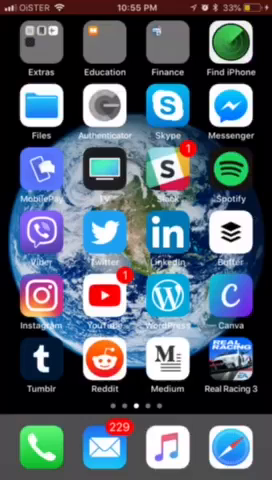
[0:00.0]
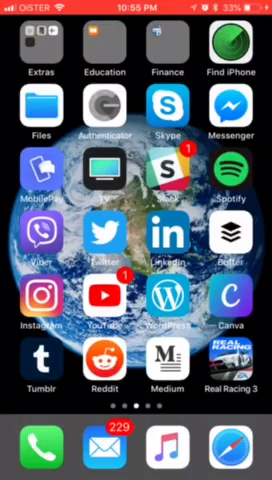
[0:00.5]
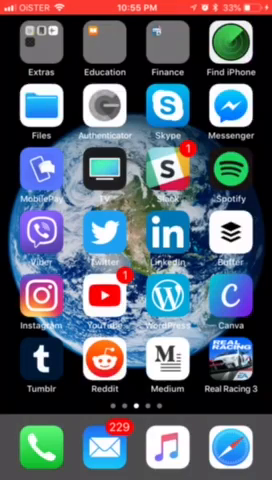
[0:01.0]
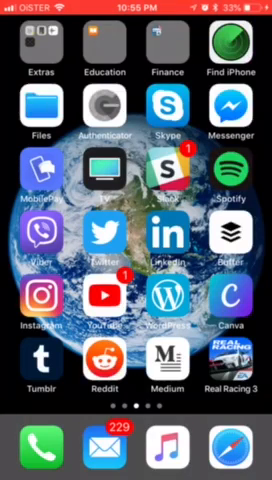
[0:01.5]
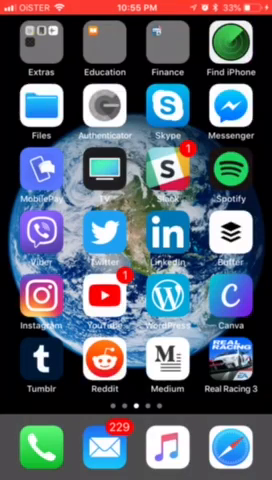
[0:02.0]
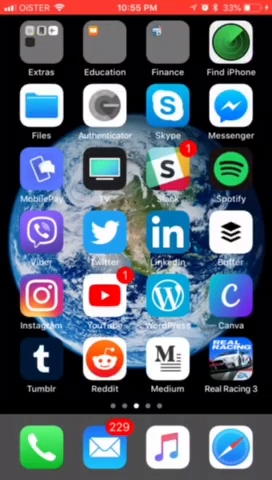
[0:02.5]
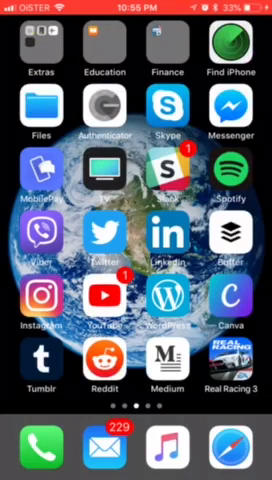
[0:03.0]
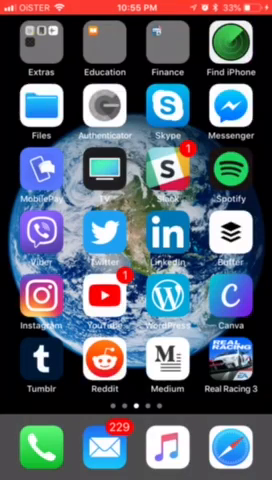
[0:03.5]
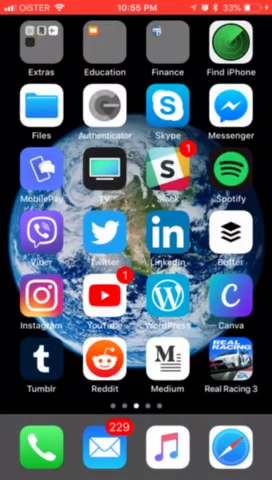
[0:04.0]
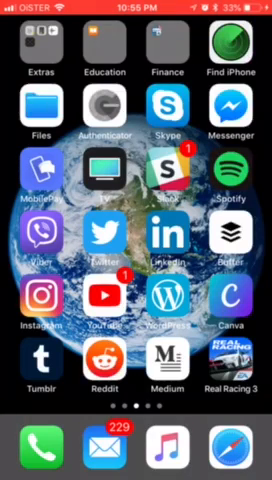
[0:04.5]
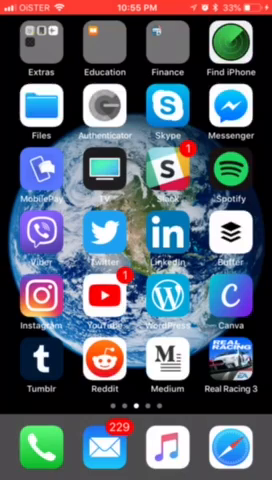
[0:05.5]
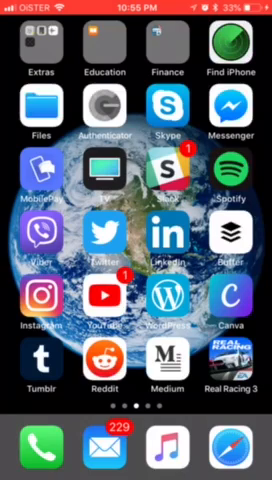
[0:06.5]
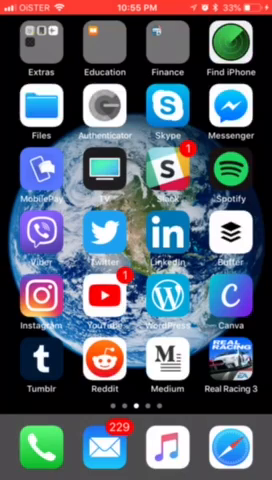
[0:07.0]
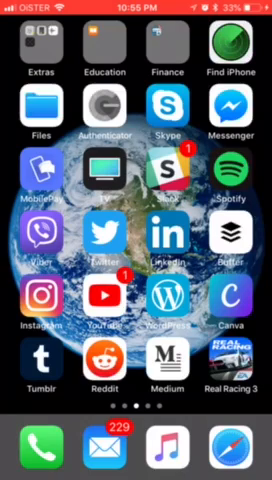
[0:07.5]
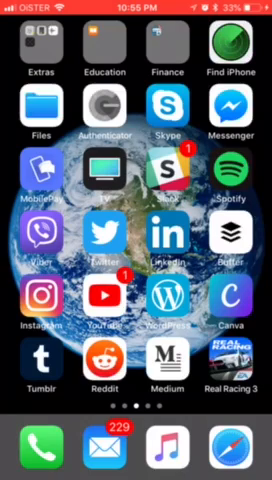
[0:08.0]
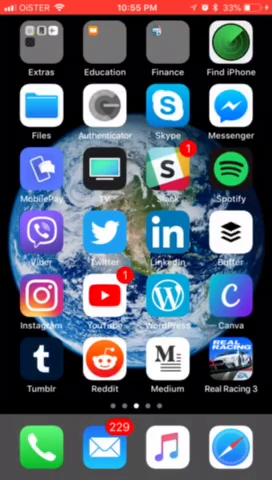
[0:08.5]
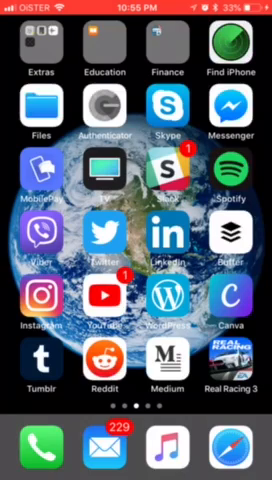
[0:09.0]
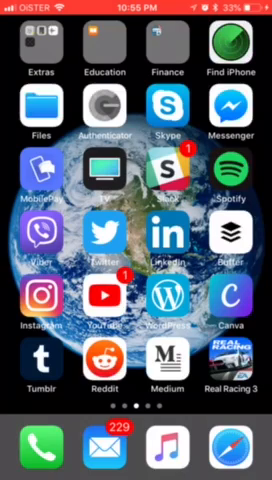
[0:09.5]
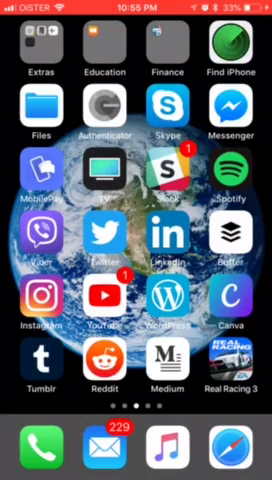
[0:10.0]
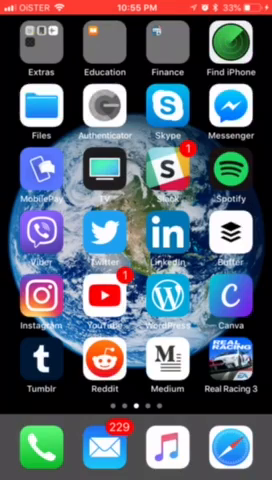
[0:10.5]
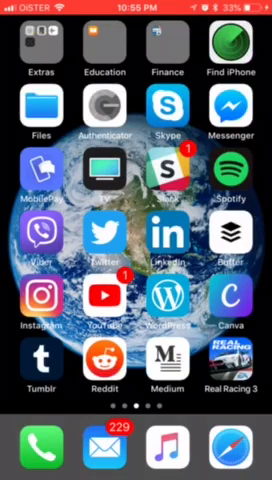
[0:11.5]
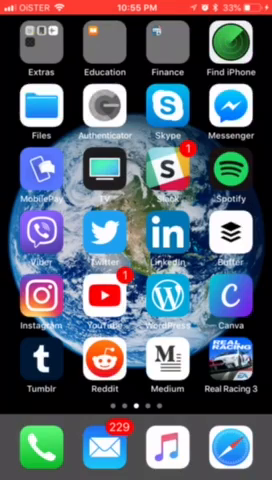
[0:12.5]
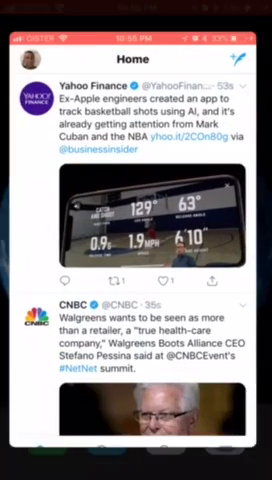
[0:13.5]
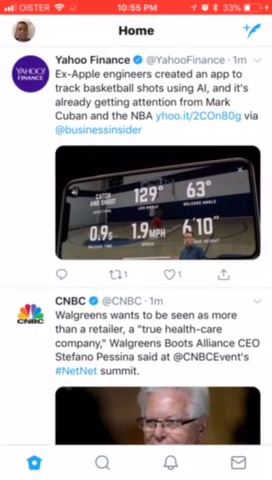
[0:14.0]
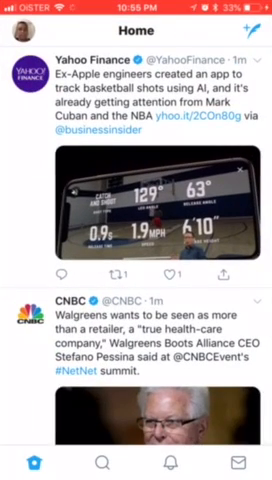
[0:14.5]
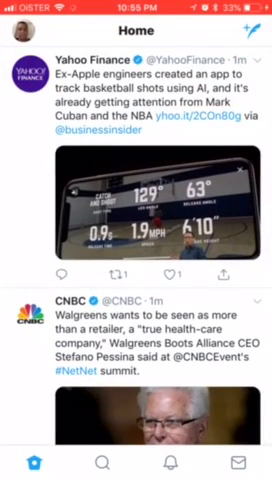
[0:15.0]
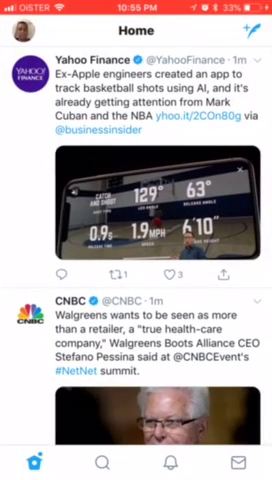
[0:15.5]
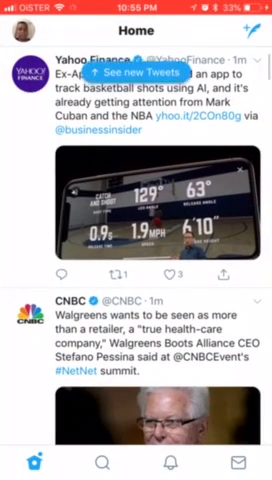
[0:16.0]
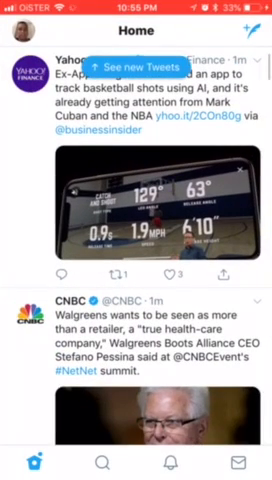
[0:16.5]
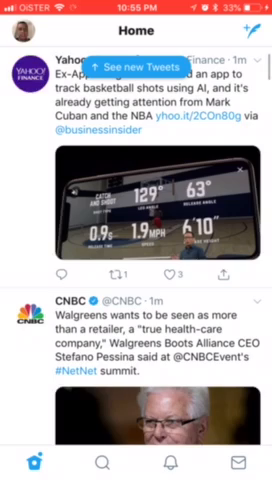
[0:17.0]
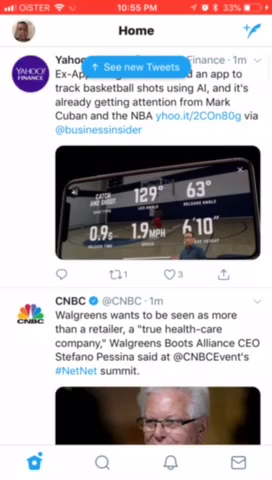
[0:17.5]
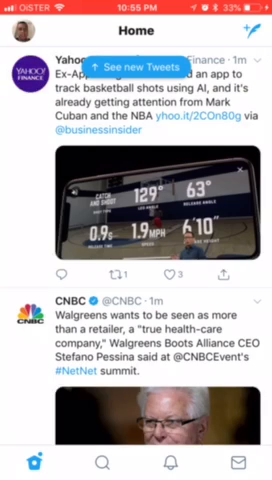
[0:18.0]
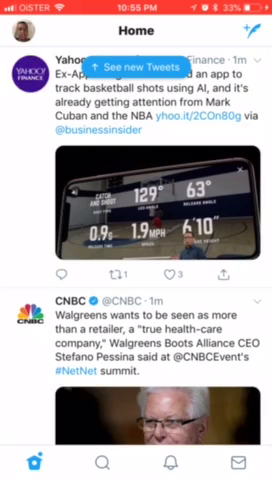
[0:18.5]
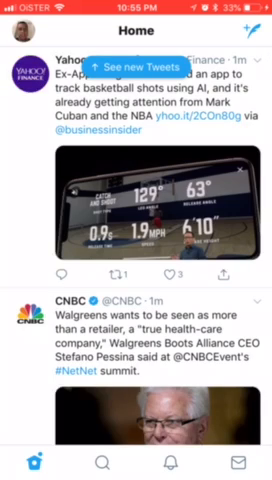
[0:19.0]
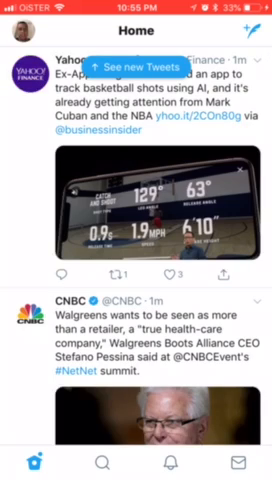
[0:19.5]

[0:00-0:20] The phone is an iPhone, and the time reads five minutes to 11 in the evening. It uses the Oyster network and is connected to Wi-Fi, with the battery at 33 percent. The apps on the iPhone include Messenger, Spotify, Find iPhone, Skype, Finance, Education, an Extras folder, Files, Instagram, Tumblr, Reddit, Medium, a call log, a messaging app, a music app, a GPS app and WordPress. The picture quality is not very good, suggesting something may be wrong with the phone. The person appears to be trying to process something but seems to be having difficulty, and which model of iPhone it is remains unclear.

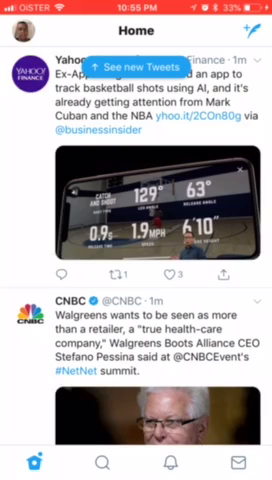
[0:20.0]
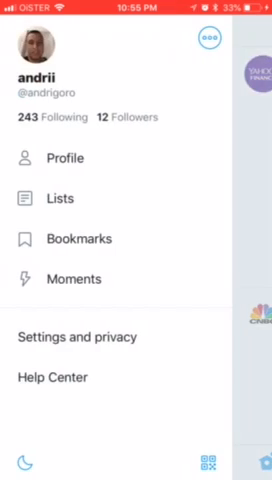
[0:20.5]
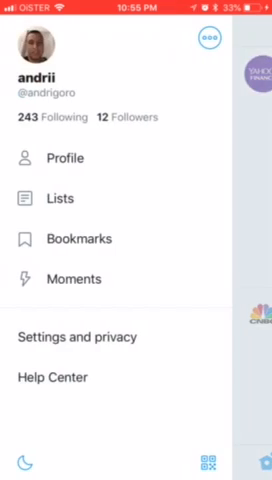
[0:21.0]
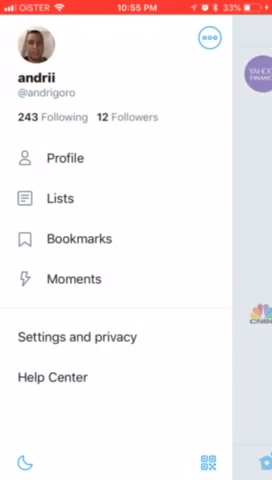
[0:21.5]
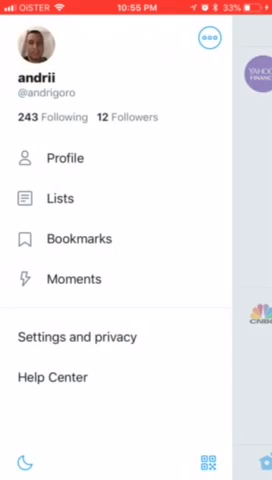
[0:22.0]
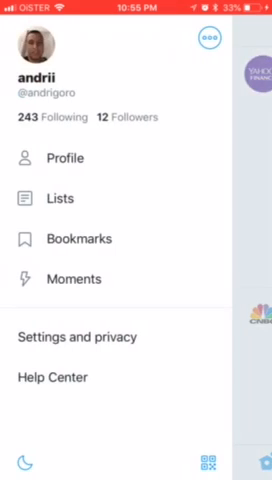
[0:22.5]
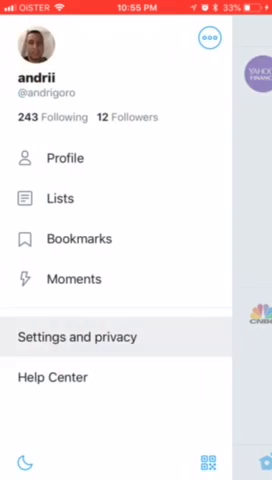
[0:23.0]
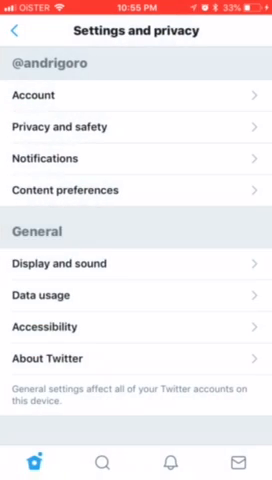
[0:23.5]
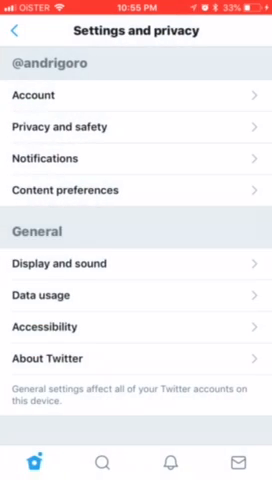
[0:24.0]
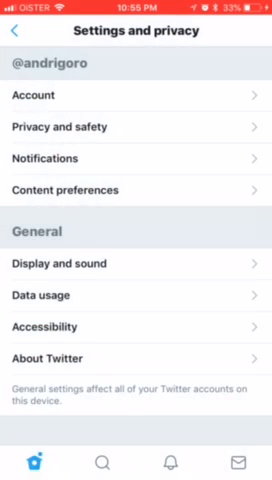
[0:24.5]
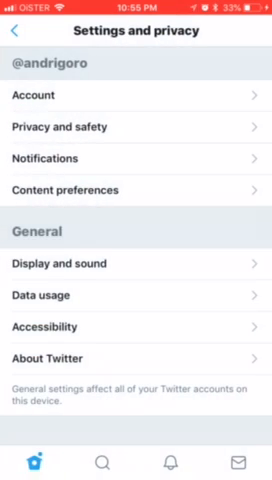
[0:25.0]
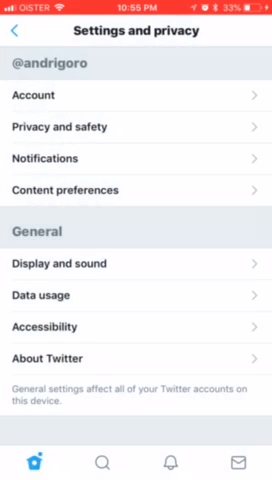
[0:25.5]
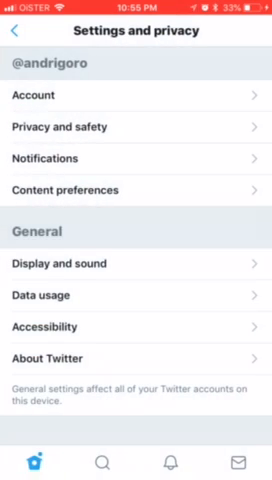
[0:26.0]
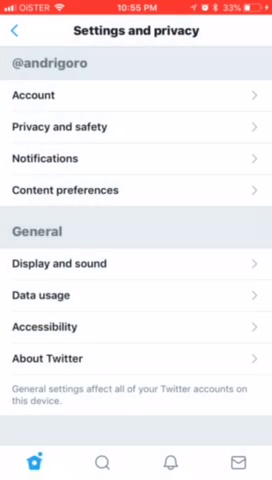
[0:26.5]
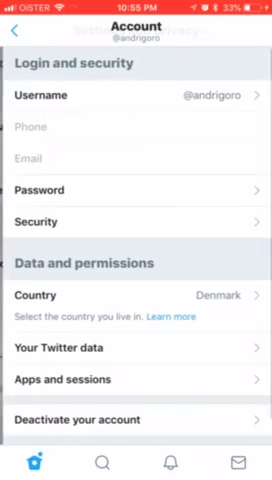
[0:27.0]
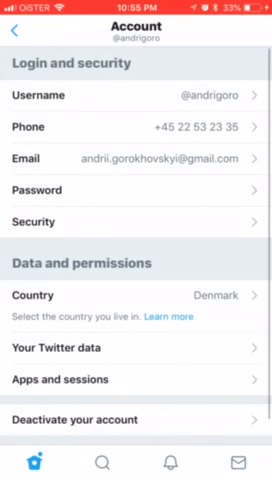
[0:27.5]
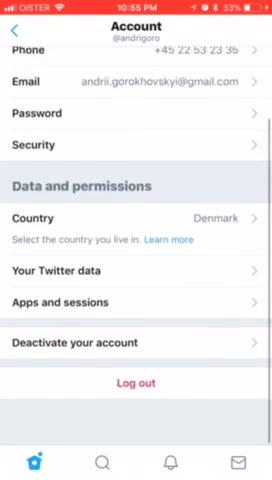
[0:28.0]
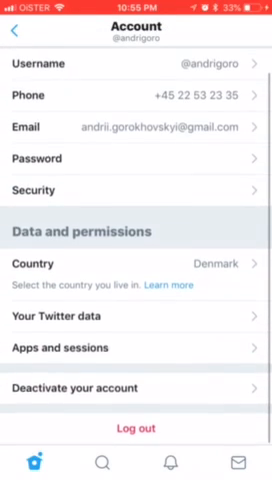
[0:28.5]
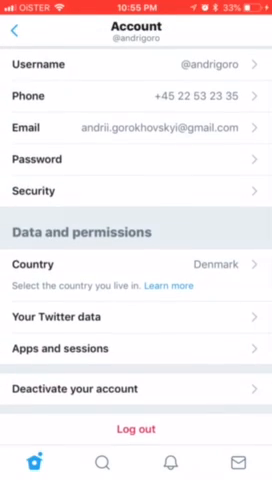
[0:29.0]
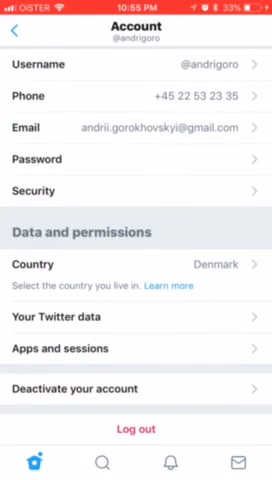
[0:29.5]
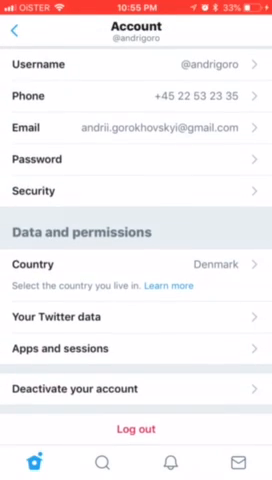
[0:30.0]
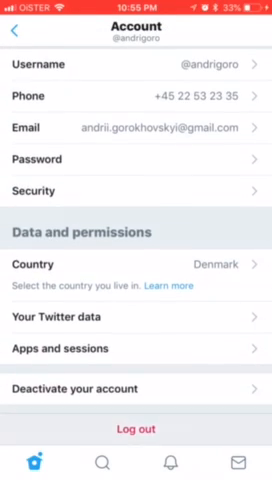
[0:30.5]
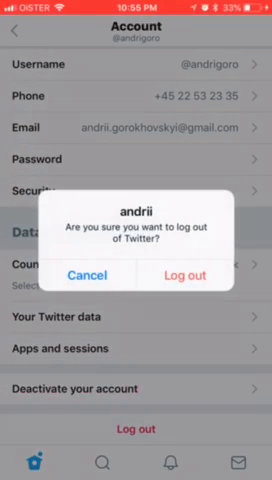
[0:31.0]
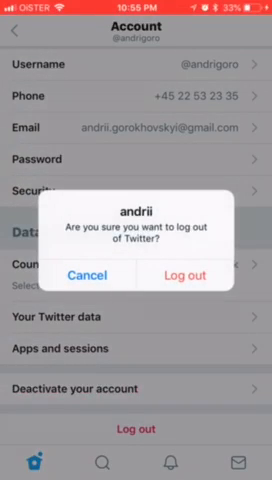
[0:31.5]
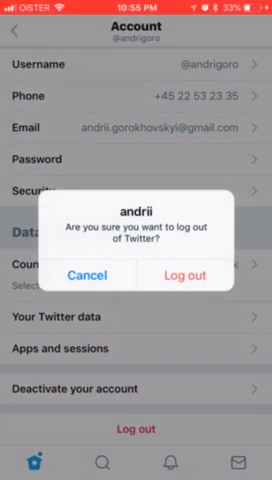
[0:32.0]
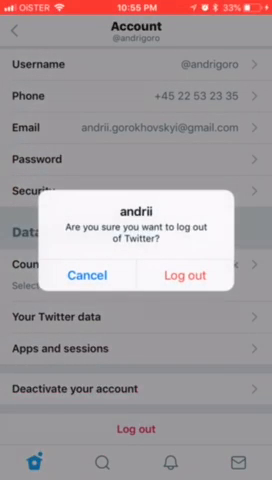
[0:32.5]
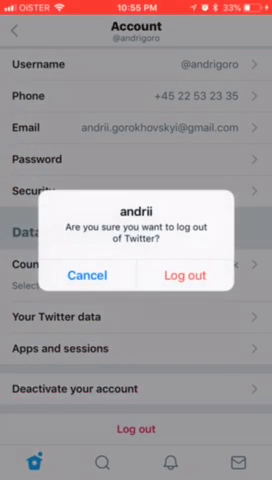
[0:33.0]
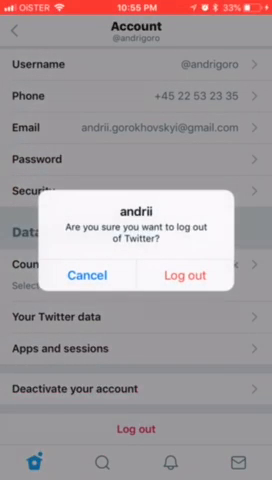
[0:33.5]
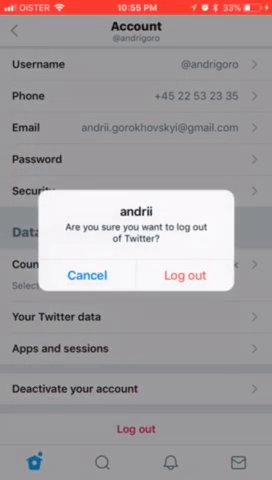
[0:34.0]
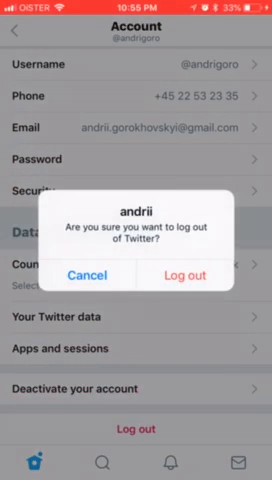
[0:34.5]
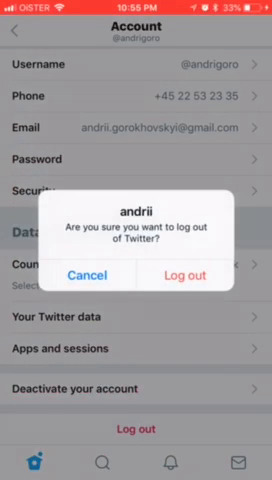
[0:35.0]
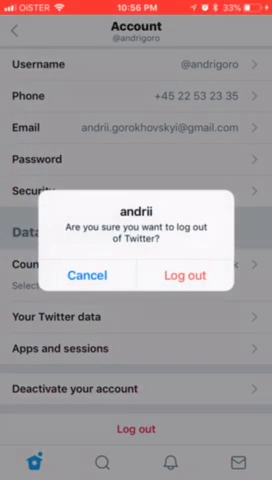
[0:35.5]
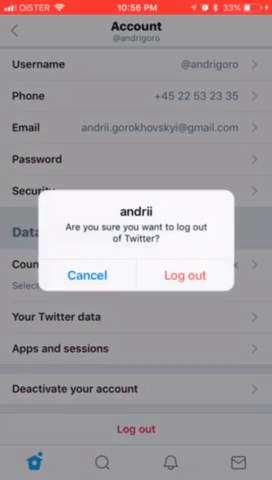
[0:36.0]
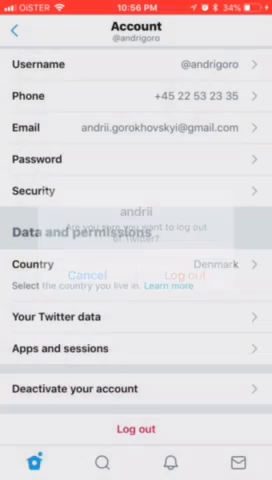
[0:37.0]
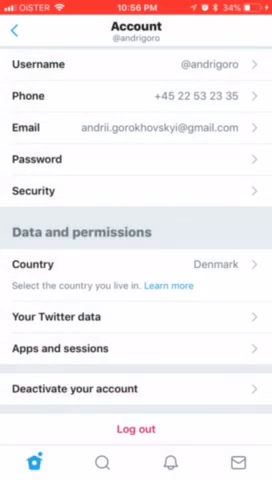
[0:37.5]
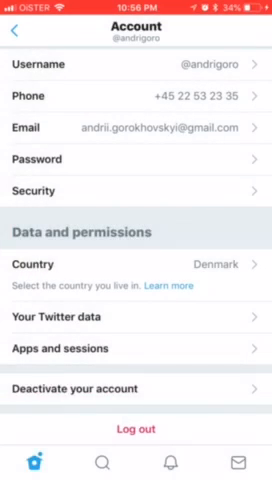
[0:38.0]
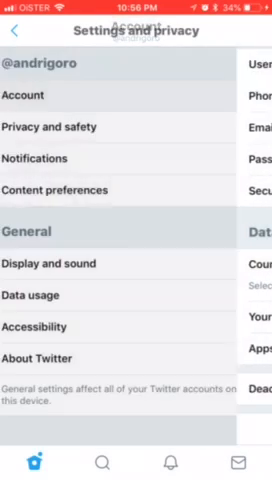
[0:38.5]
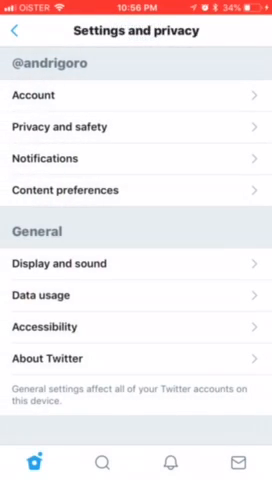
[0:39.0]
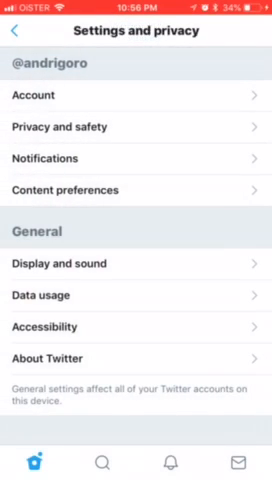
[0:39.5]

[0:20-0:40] A Yahoo page is being opened, showing a story that says "an app to track basketball shows using AI" and that it is "already getting an extension from Mark Cuban at the NBA." A blue notification indicates new tweets waiting to be loaded. Text on the page reads "1.9 degrees," "63 degrees," "0.9 seconds," "1.9 milliseconds," "6 to 10 inches" and "Walgreens wants to be seen as more than a retailer." Another post mentions "the true healthcare company Walgreens." Next come the settings and privacy options, then general, display, password, security, country and your data. The person, named Andre, wants to log out of Twitter and seems to be running into problems while trying to solve them. The iPhone shows the time as five minutes to 11, is connected to Wi-Fi, has the battery at 33% and is charging. An alarm is also set on the phone.